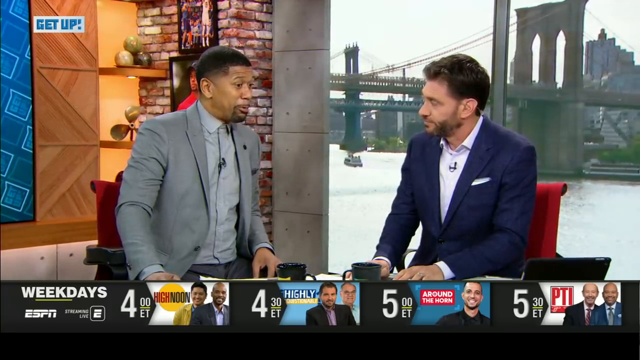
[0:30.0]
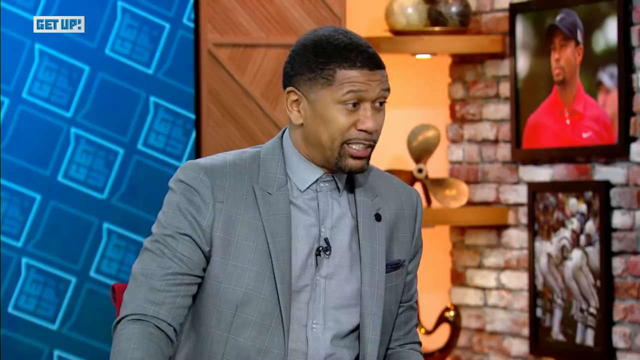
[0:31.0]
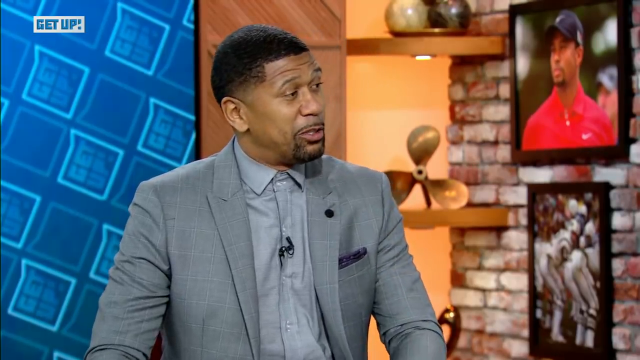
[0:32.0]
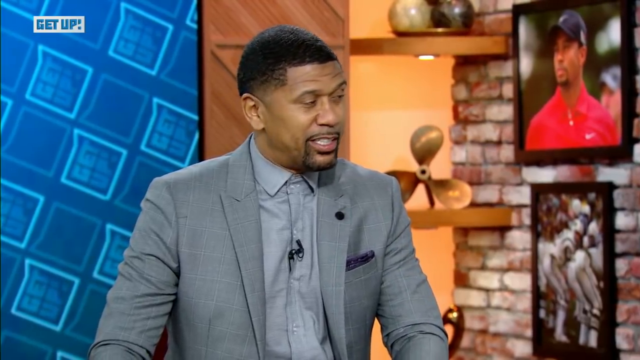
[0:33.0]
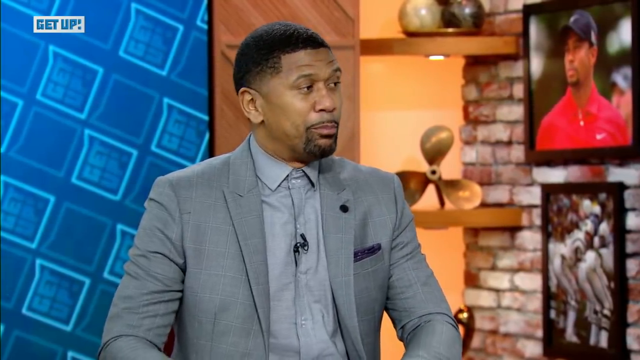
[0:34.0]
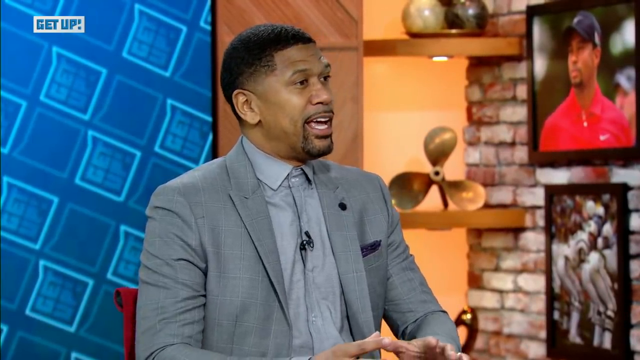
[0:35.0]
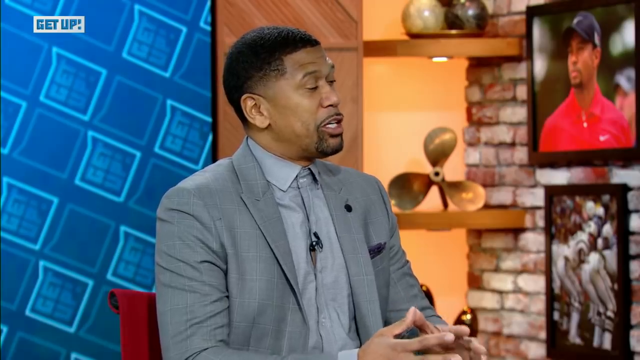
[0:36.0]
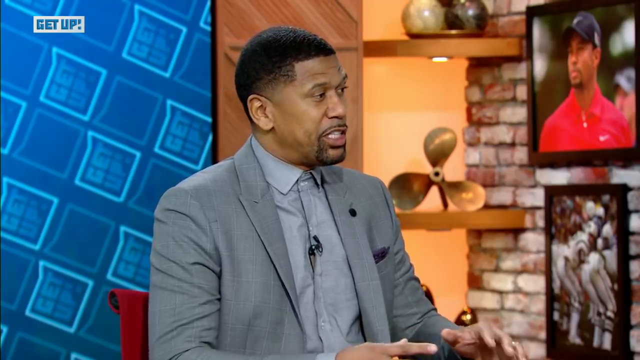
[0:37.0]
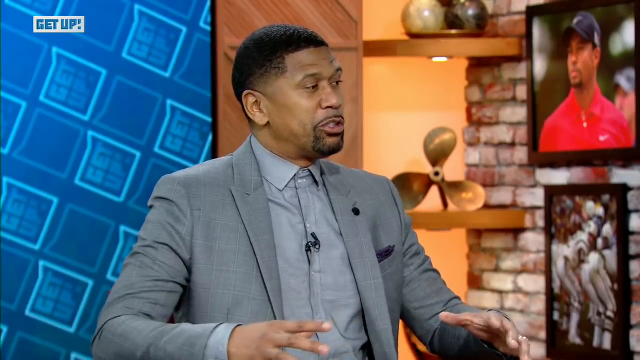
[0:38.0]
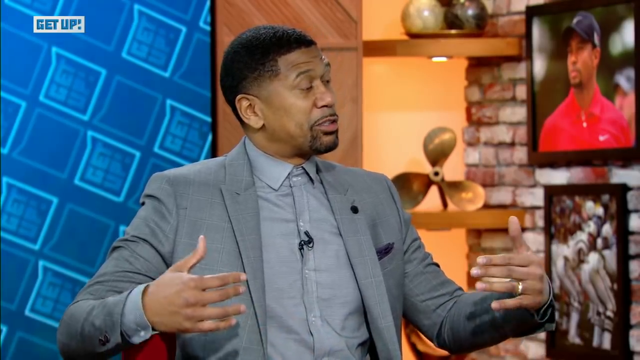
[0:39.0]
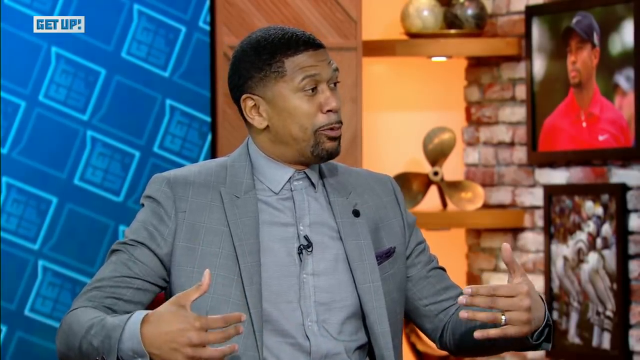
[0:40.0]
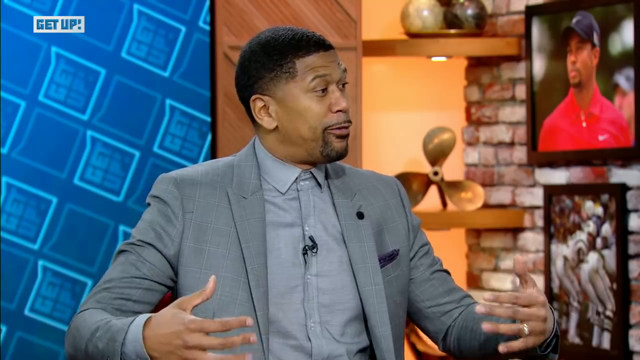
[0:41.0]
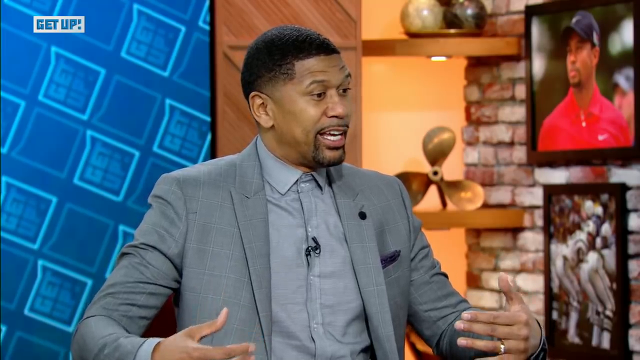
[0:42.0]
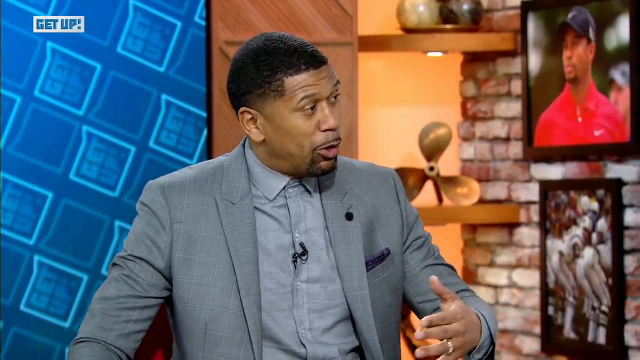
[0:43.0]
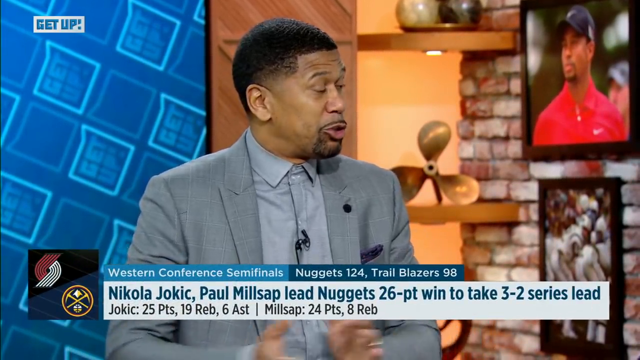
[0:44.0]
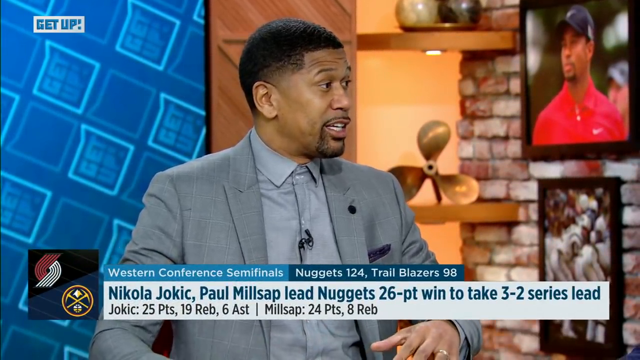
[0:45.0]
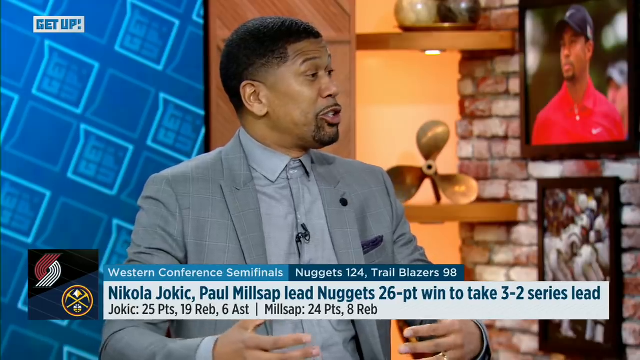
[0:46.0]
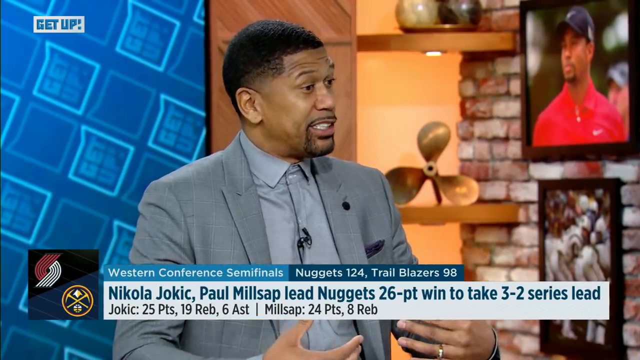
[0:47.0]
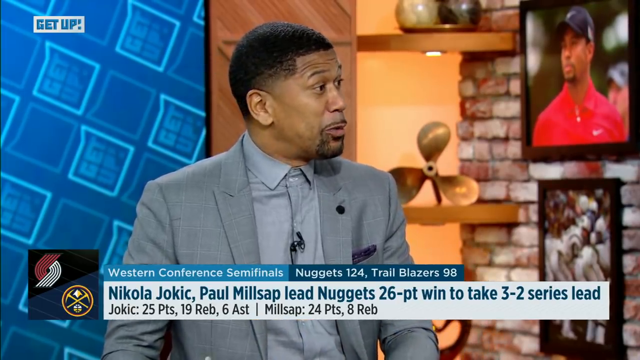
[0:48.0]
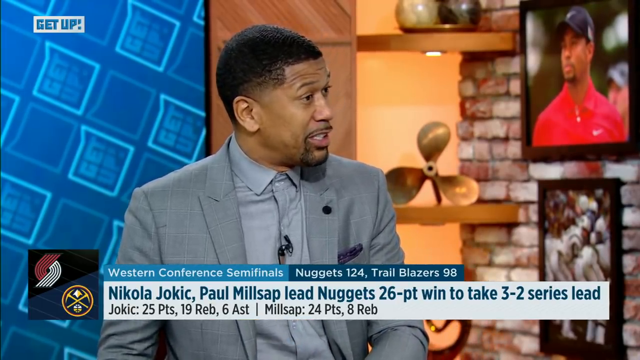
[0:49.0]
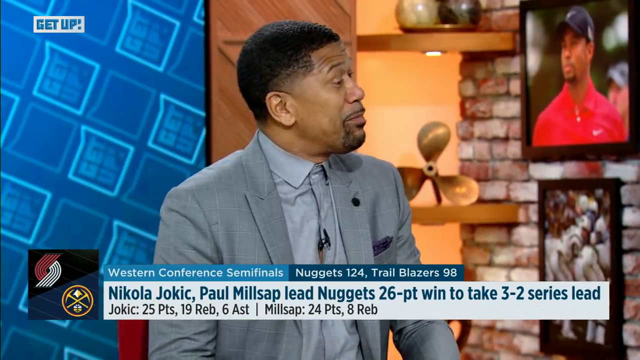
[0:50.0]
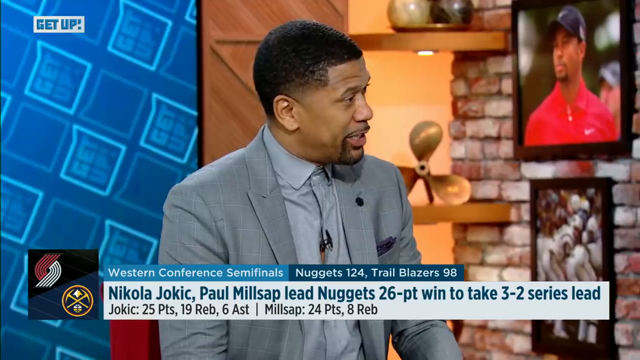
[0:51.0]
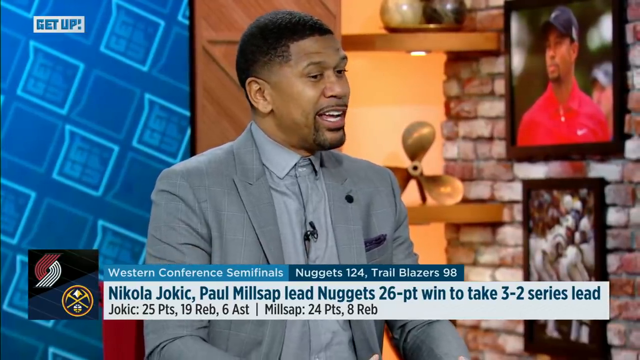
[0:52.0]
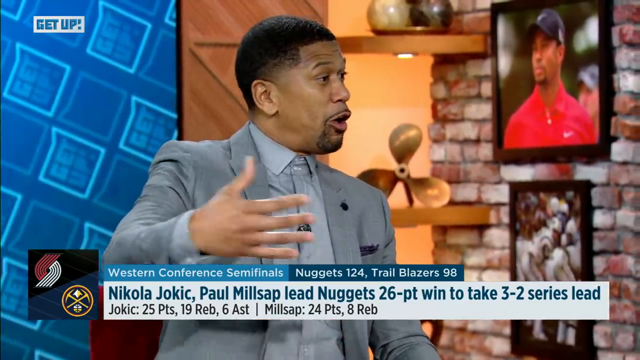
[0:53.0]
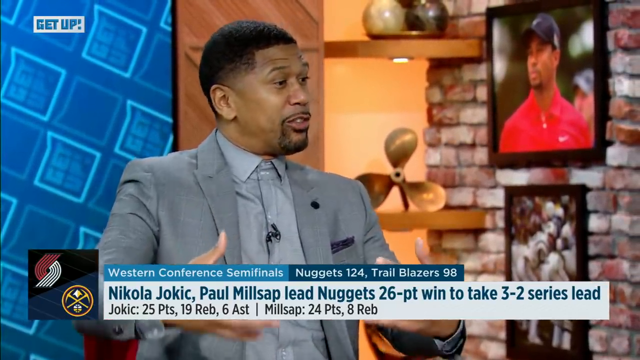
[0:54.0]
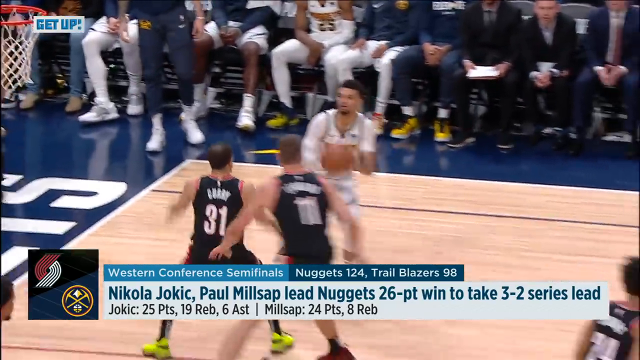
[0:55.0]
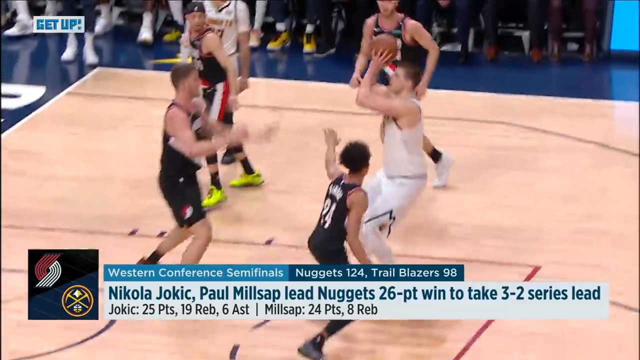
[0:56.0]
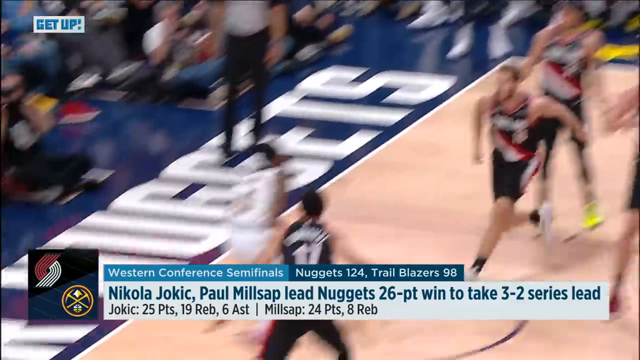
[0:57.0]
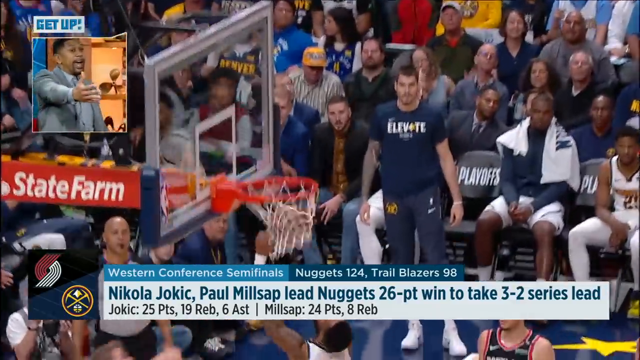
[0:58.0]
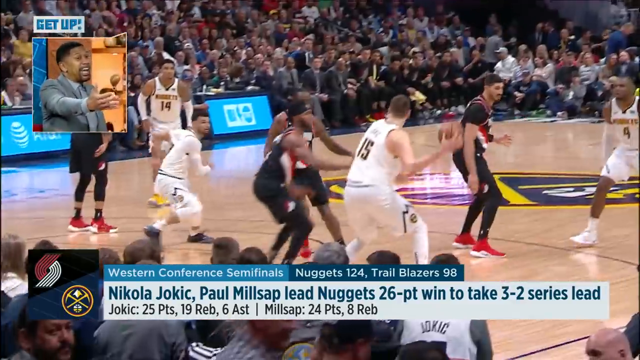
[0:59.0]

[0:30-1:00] Two men face each other at a desk. The man on the left of the screen is a black man with short dark hair, wearing a light gray jacket, a light gray shirt and black pants; he is sort of half turned toward the other man. The other is a youngish white man with slightly longer hair and a beard, wearing a dark blue jacket with a handkerchief slightly visible from the top pocket on the left side of the jacket, and a white shirt. Both have a small microphone visible near the top of their shirts. Below them is an information bar that starts on the left with "weekdays" and below that "ESPN streaming live". Reading across the screen: at "4 ET" is "high noon" with an image presumably of that program's two presenters; at "4:30 ET" is a show with an unclear title and its two presenters; toward the right, at "5 ET", the show is "around the horn", pictured with a smiling white man in a black shirt; and in the far bottom right corner, at "5:30 ET", the show is apparently "PTI", apparently featuring two older men, one white and one black.